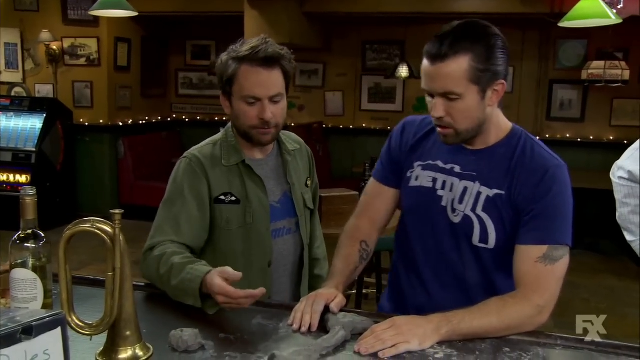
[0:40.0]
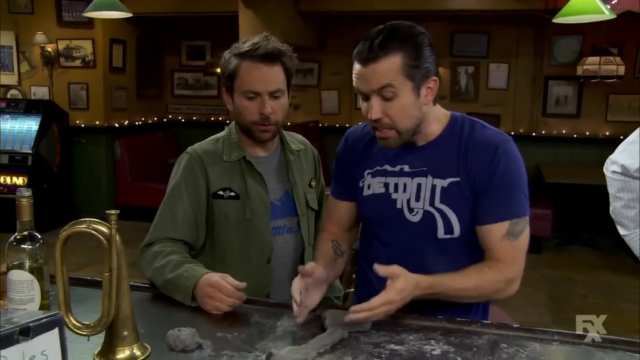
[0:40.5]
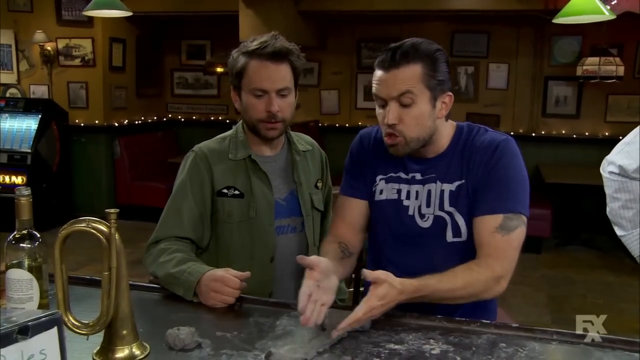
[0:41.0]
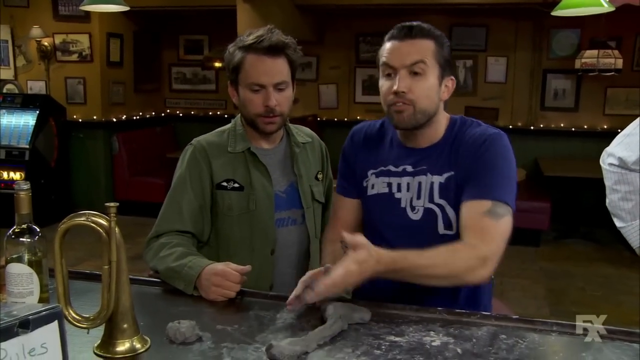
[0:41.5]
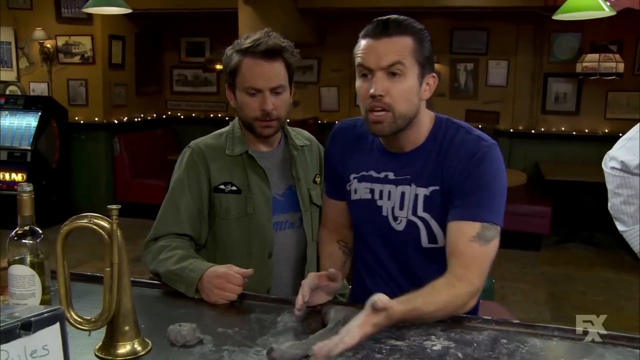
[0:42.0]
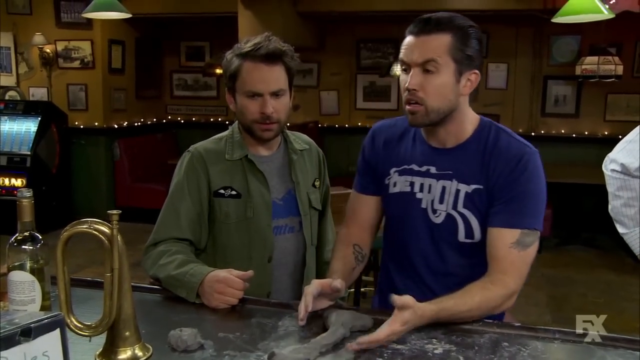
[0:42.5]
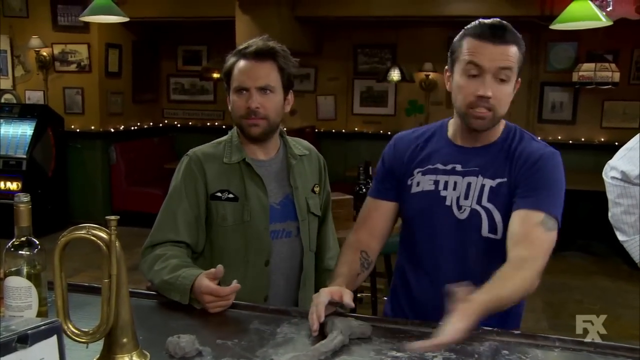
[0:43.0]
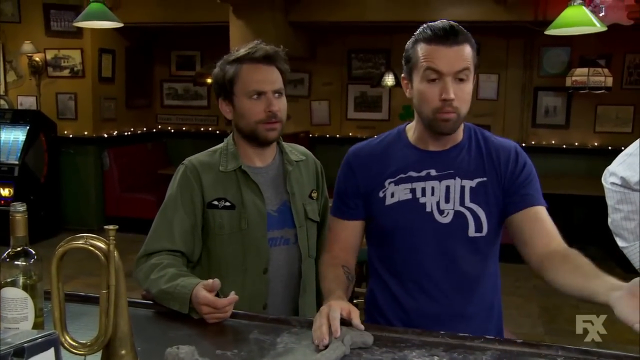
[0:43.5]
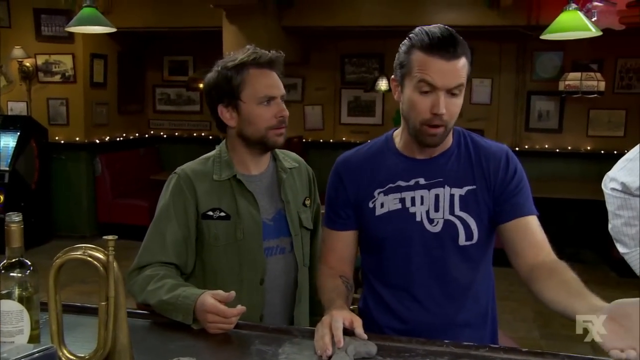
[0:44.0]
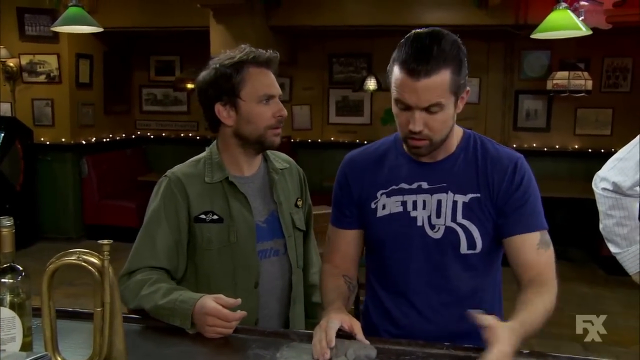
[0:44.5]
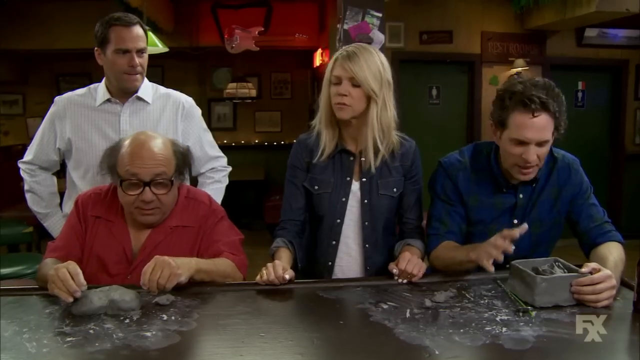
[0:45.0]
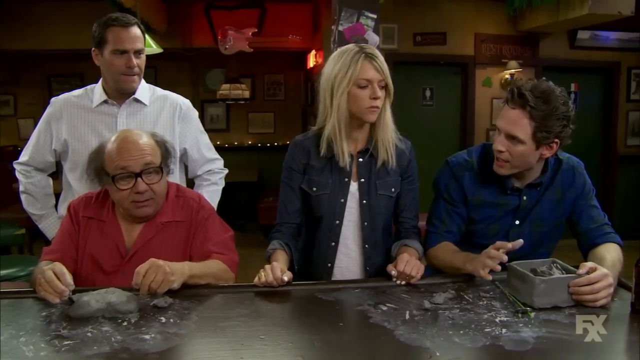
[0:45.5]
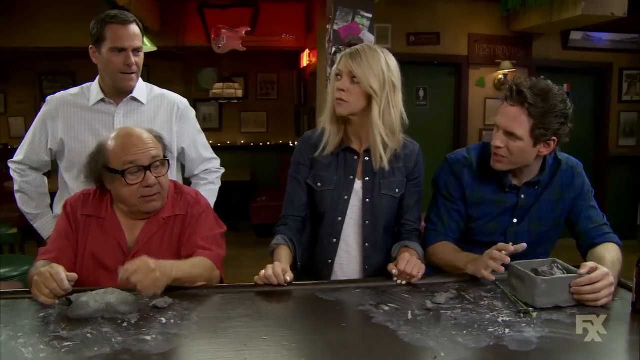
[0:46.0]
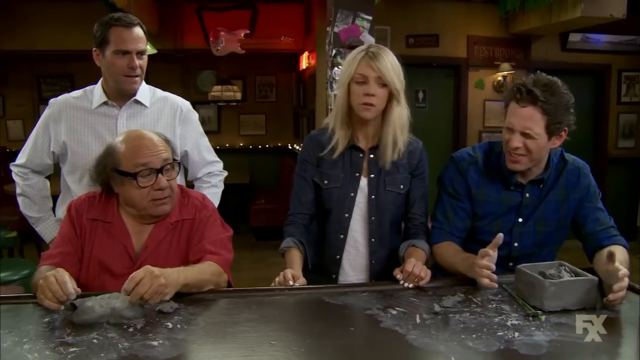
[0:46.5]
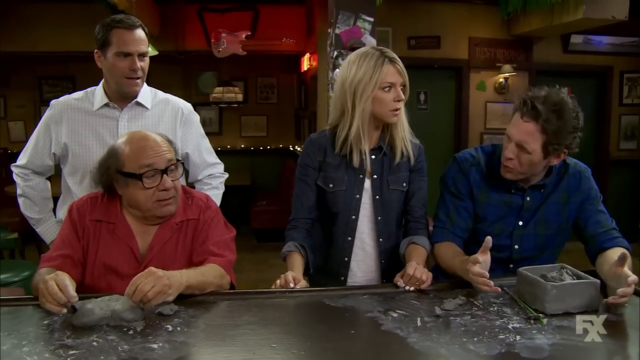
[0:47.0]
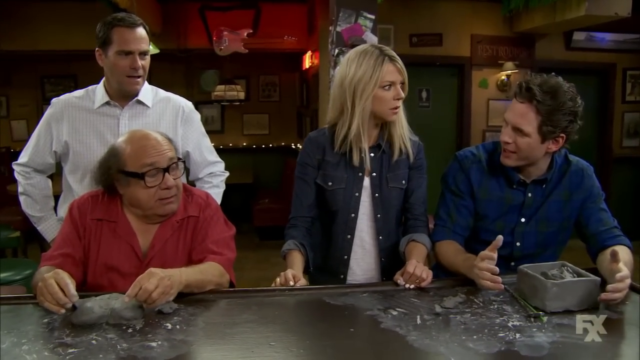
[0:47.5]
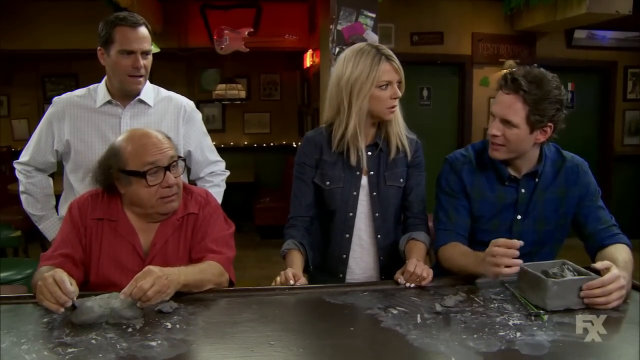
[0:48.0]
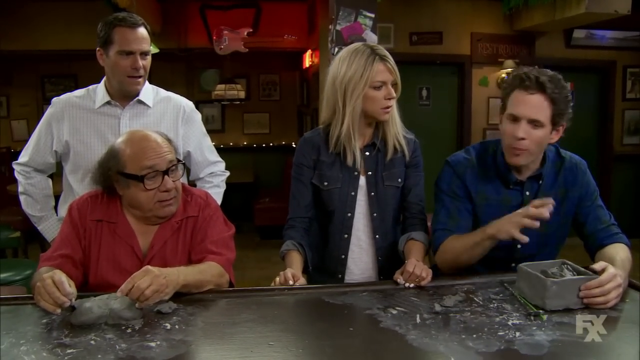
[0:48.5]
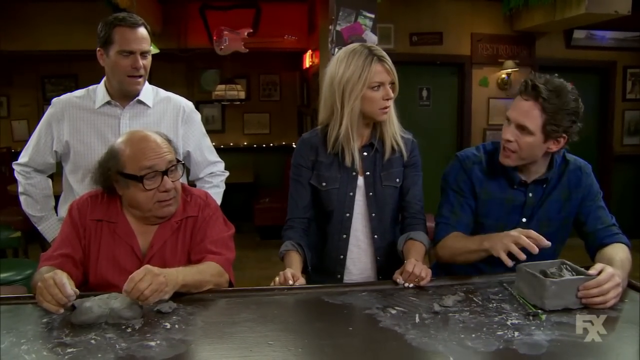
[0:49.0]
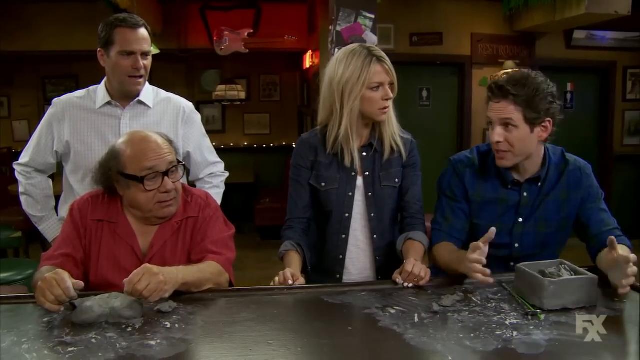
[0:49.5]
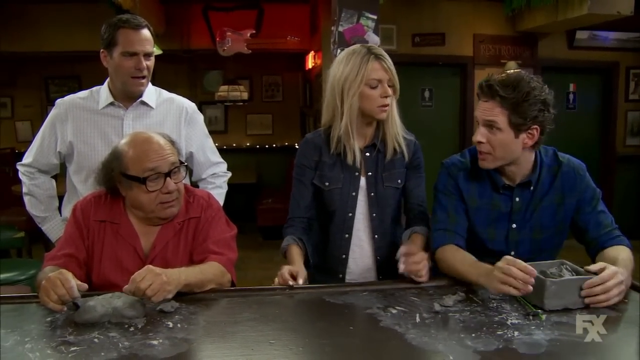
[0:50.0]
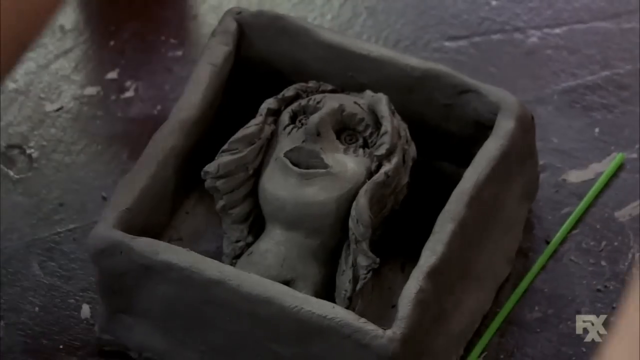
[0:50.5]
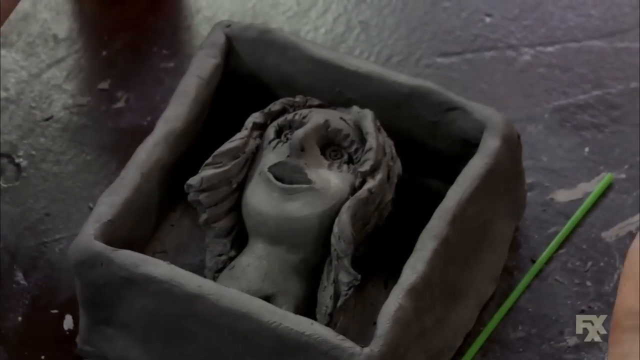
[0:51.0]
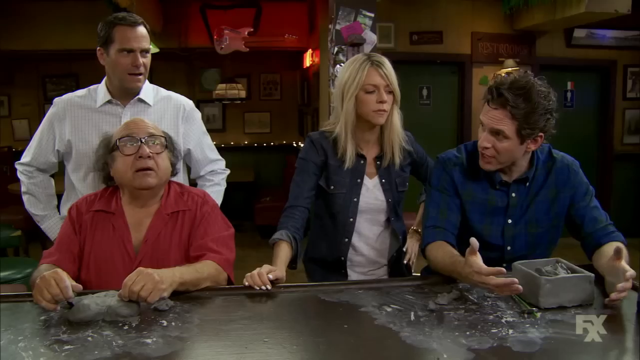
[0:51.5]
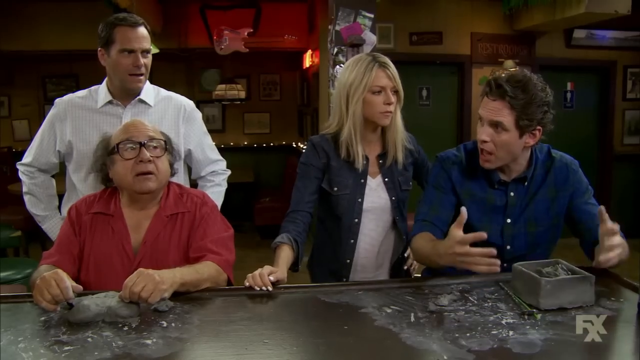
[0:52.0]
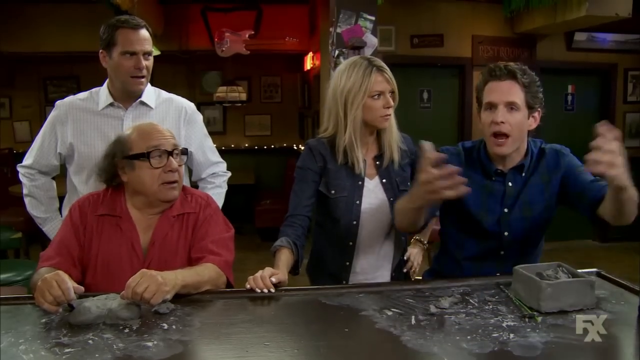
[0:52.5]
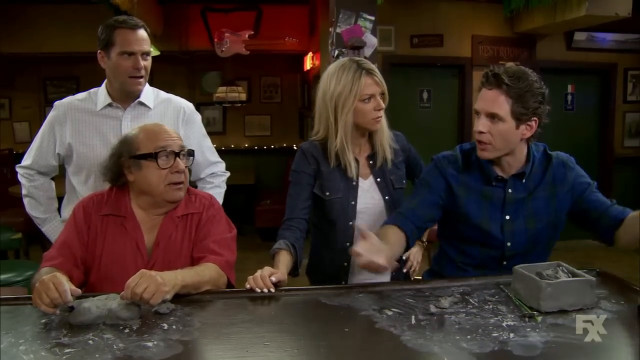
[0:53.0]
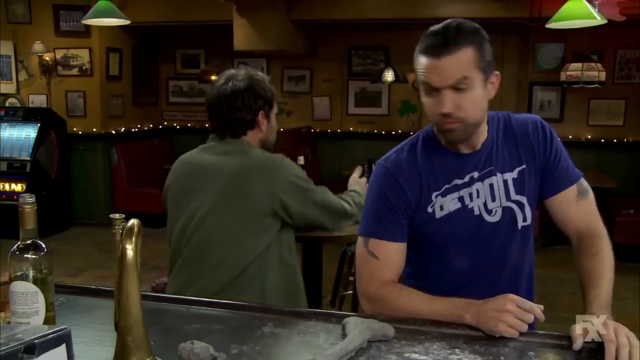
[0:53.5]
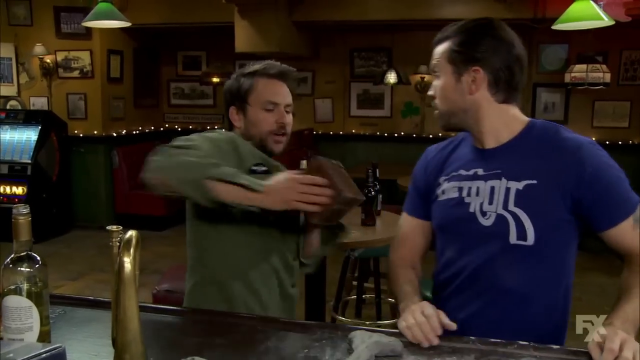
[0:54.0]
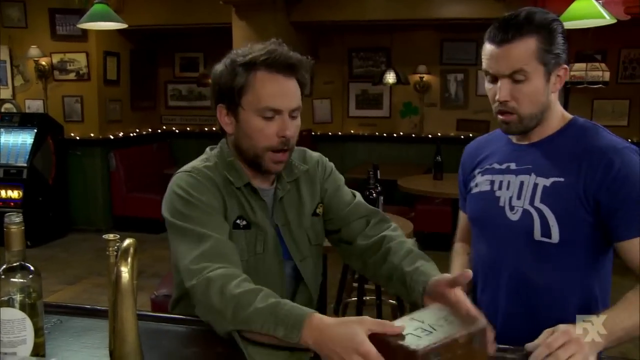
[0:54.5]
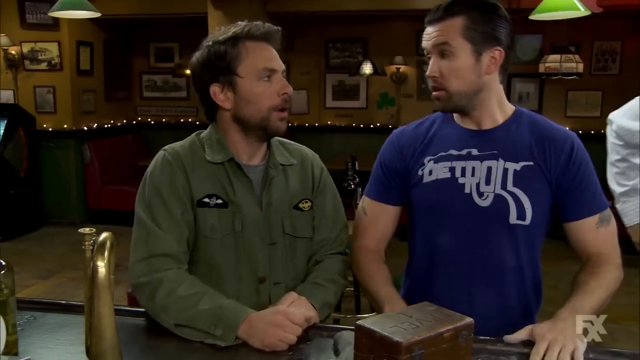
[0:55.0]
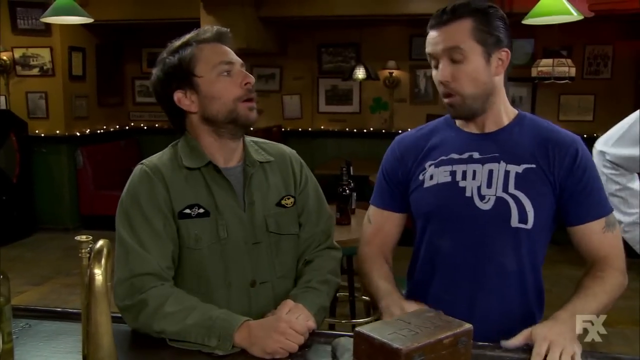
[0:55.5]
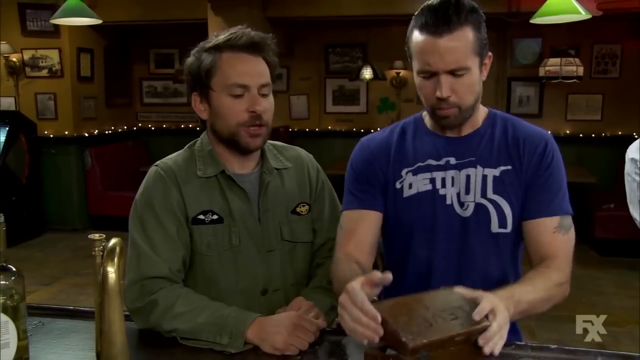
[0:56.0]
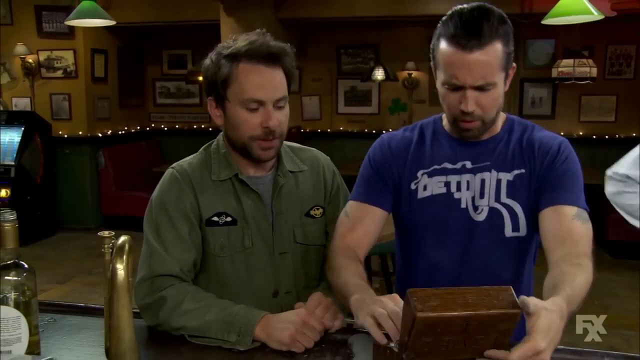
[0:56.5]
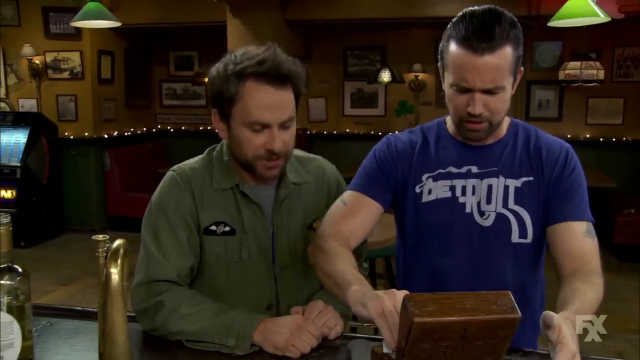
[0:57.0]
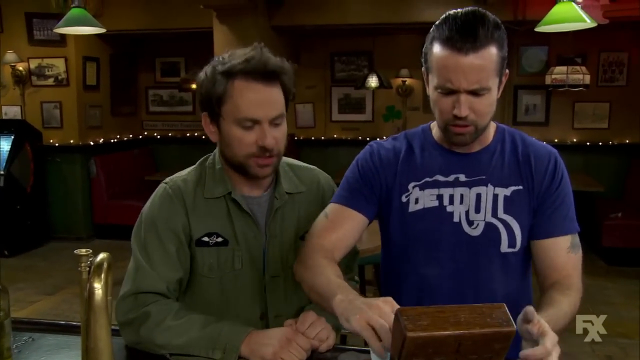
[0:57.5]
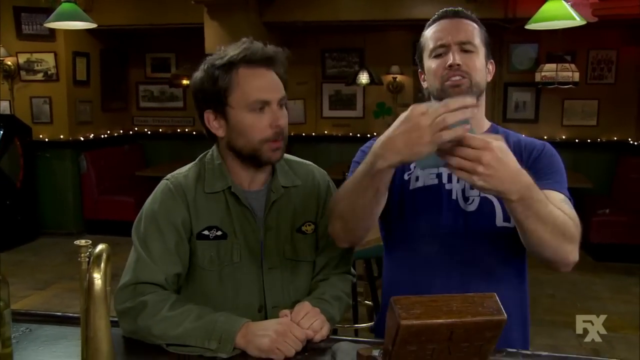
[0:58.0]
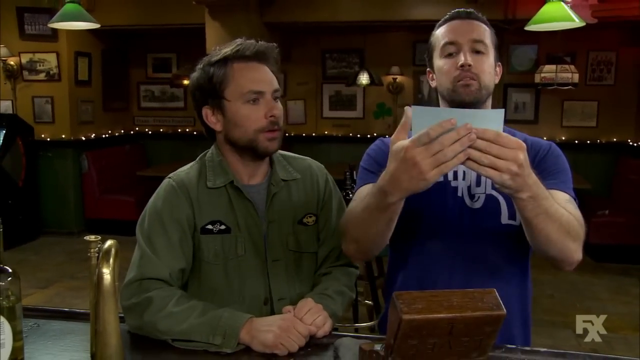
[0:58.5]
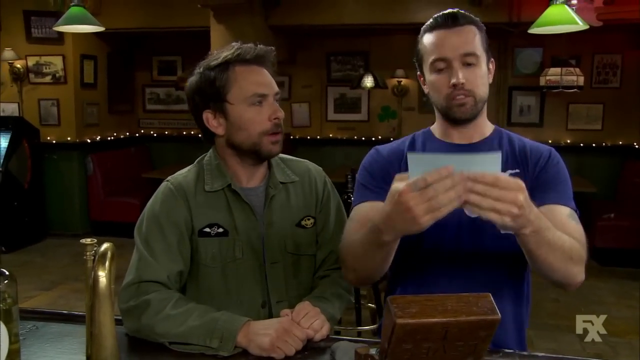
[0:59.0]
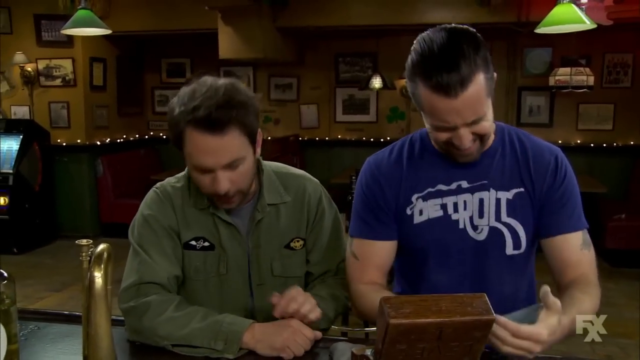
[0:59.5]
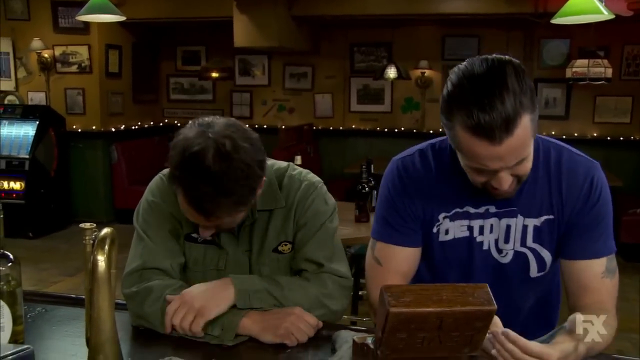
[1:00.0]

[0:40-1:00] The man in the green shirt is seen closer: his green shirt is open over a grey t-shirt with some type of blue graphic on it. He looks like he is asking the man in the blue shirt about his clay mold, or commenting on it. The man in the blue shirt seems very aggravated and swings his left arm out. The man at the end of the bar in the green and blue shirt is complaining and showing off his artwork. The man in the blue t-shirt then gets a box, takes paper out of it and reads it, with a look that seems to say "oh no" or "I get it." The man in the blue t-shirt then has his head down, and so does the man in the green shirt.